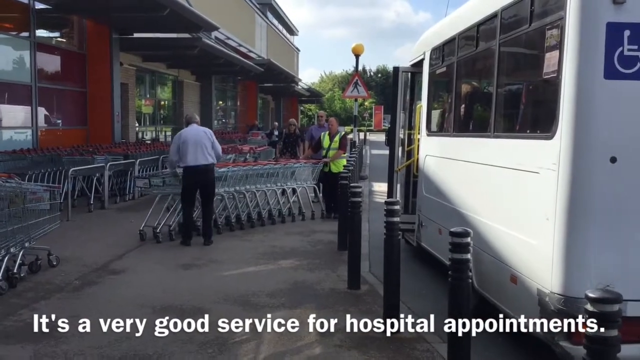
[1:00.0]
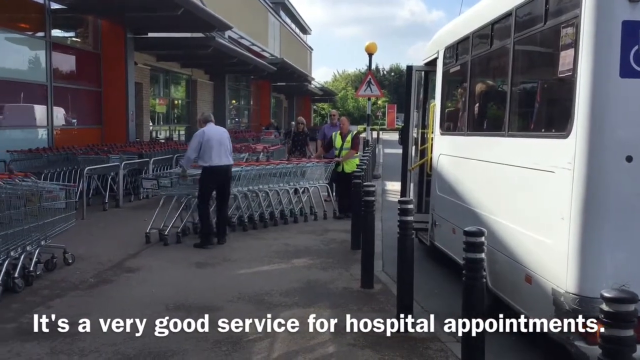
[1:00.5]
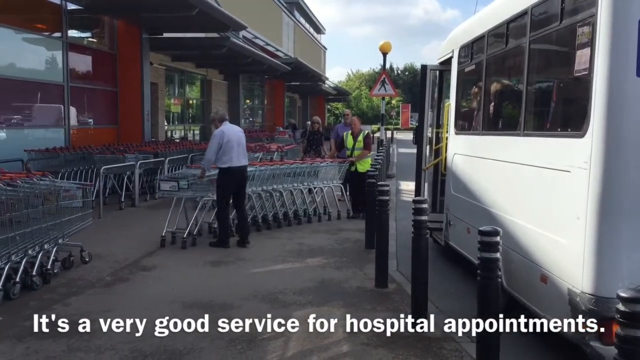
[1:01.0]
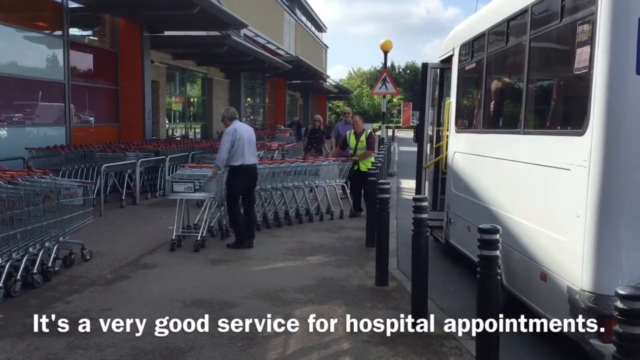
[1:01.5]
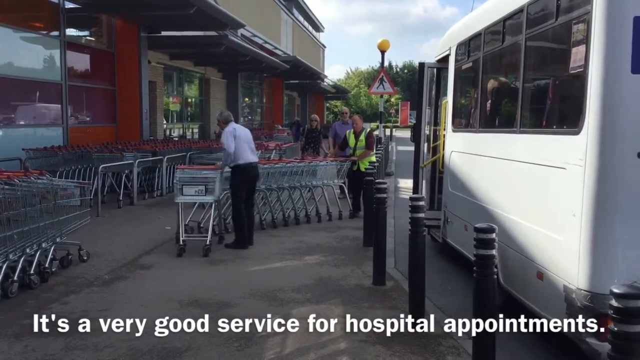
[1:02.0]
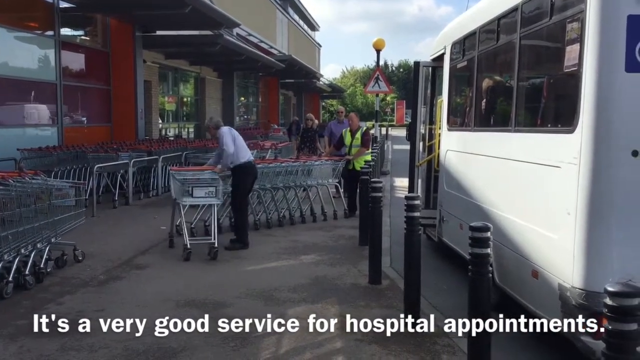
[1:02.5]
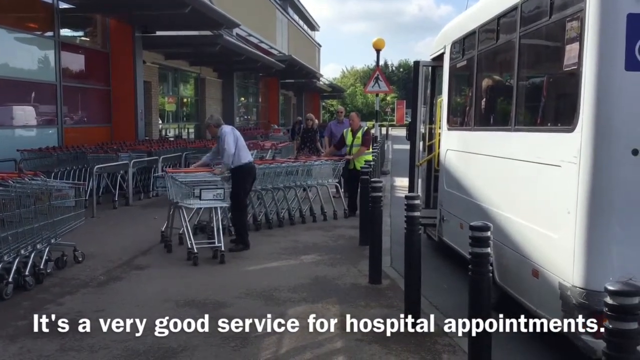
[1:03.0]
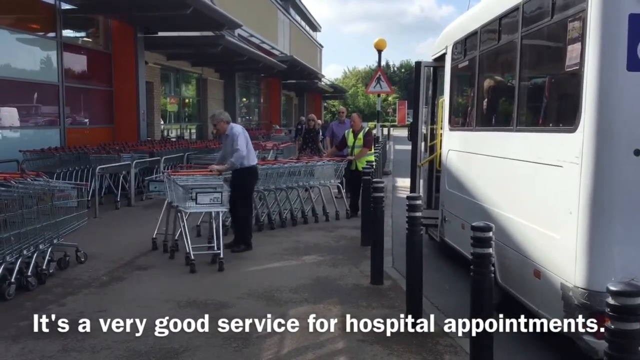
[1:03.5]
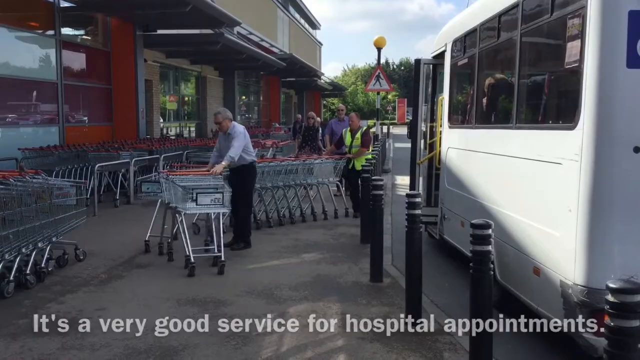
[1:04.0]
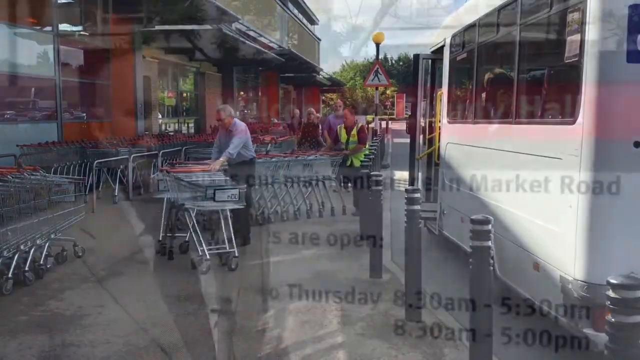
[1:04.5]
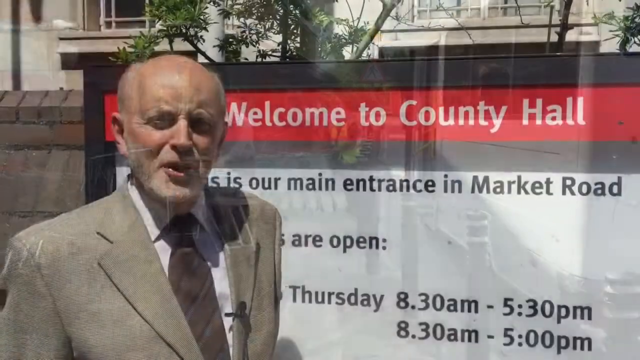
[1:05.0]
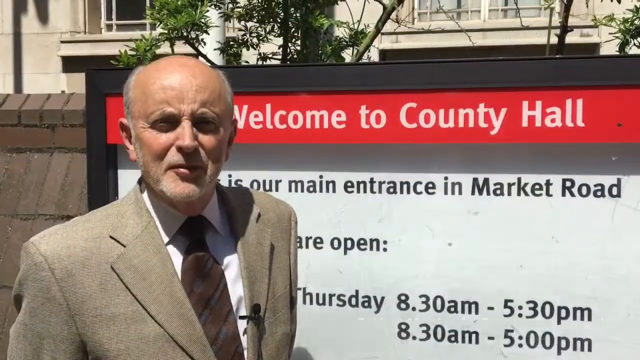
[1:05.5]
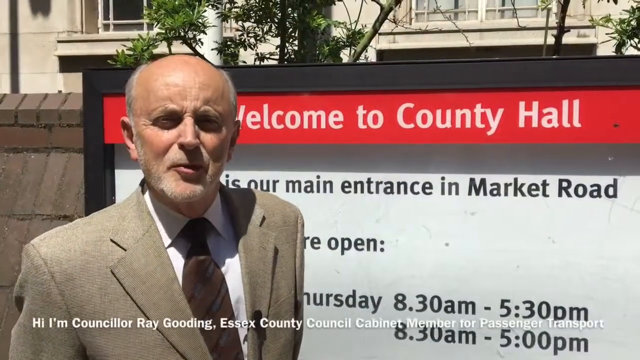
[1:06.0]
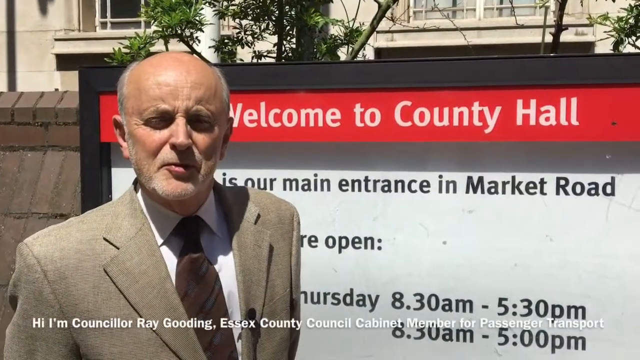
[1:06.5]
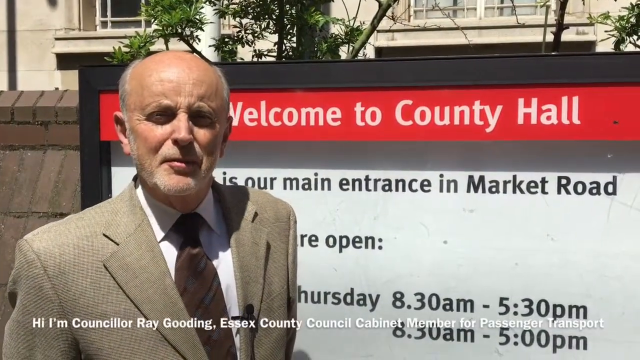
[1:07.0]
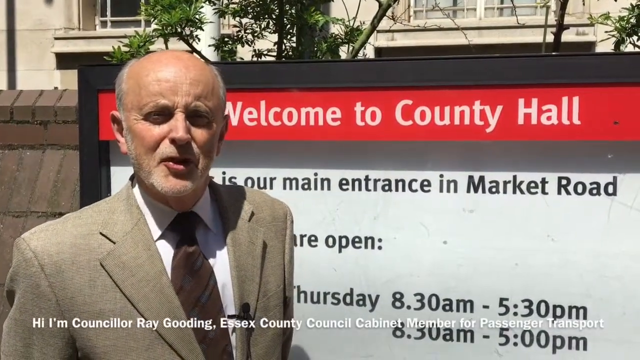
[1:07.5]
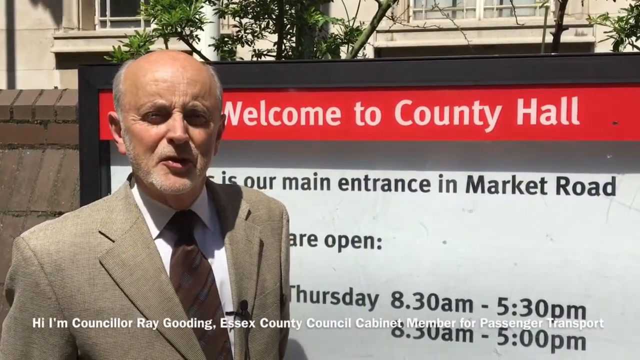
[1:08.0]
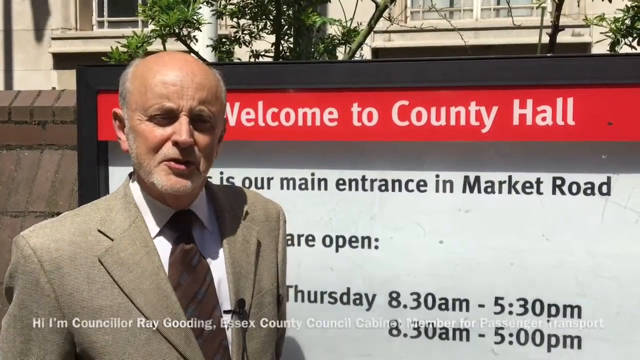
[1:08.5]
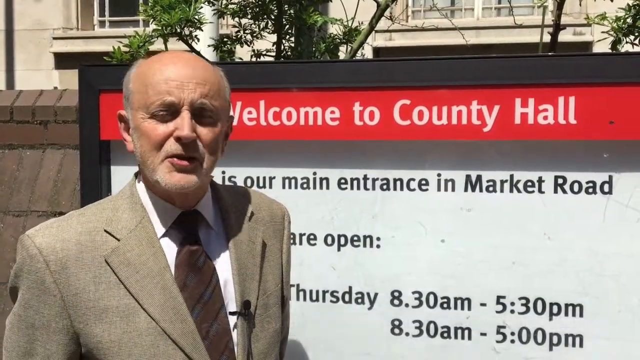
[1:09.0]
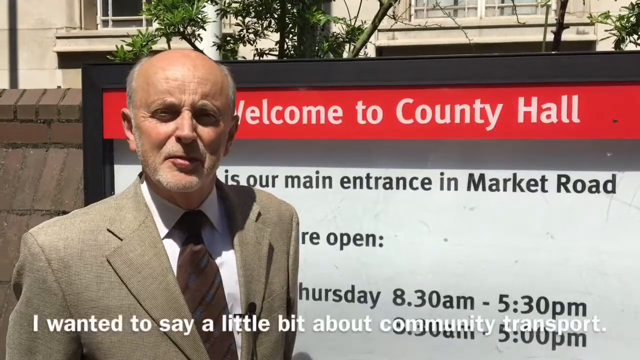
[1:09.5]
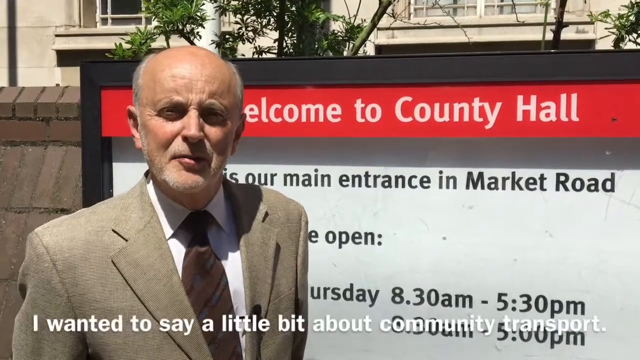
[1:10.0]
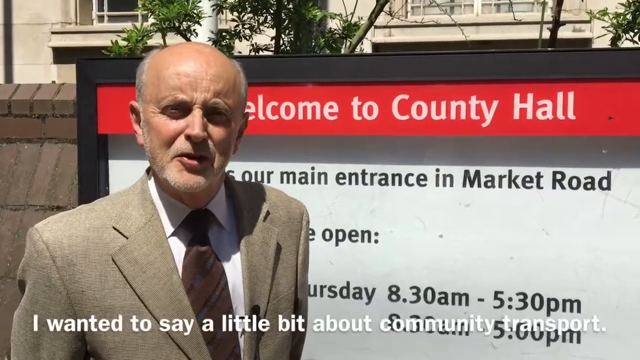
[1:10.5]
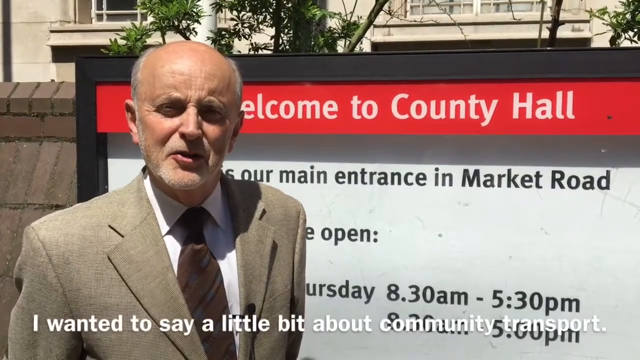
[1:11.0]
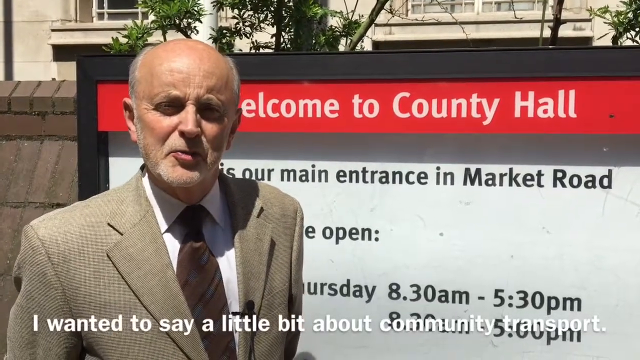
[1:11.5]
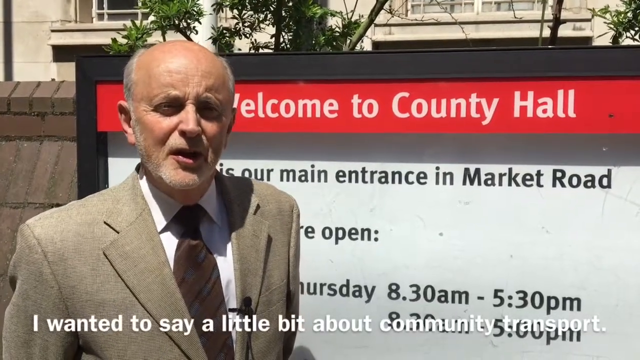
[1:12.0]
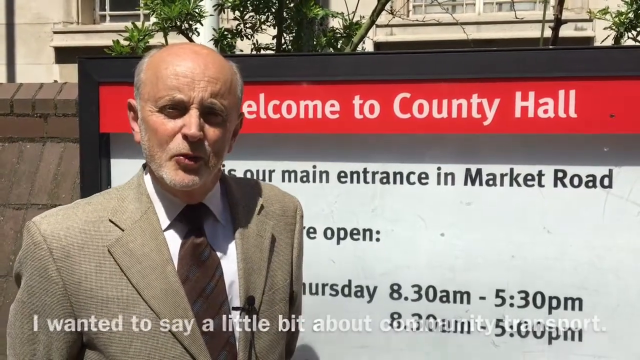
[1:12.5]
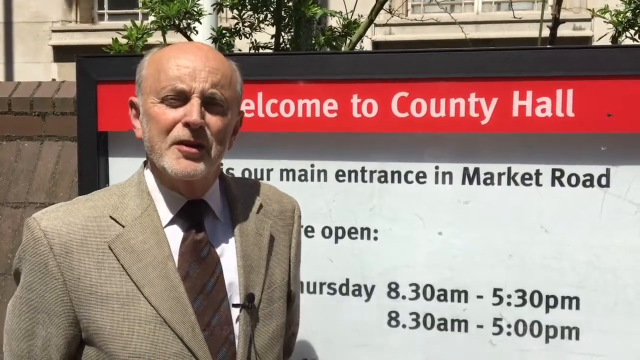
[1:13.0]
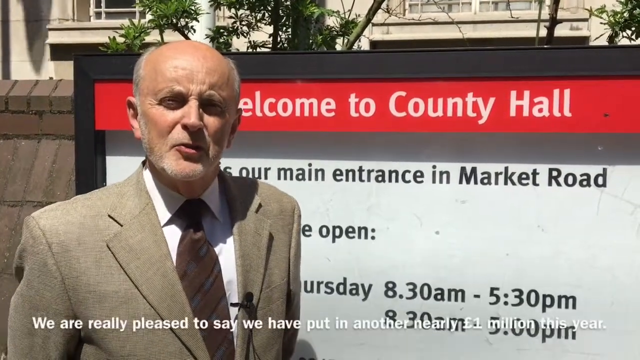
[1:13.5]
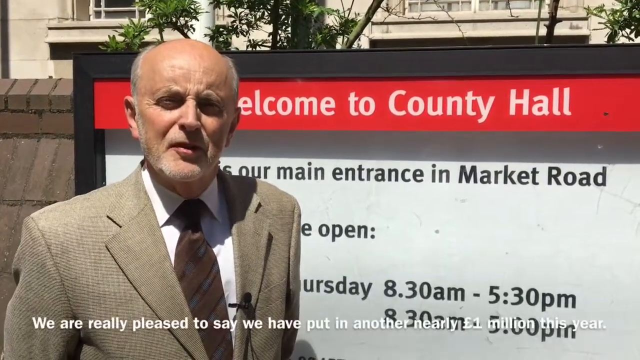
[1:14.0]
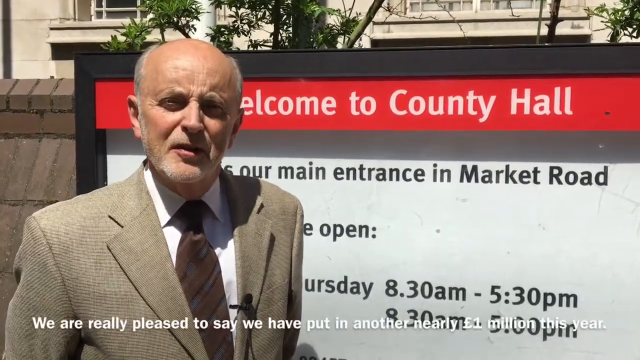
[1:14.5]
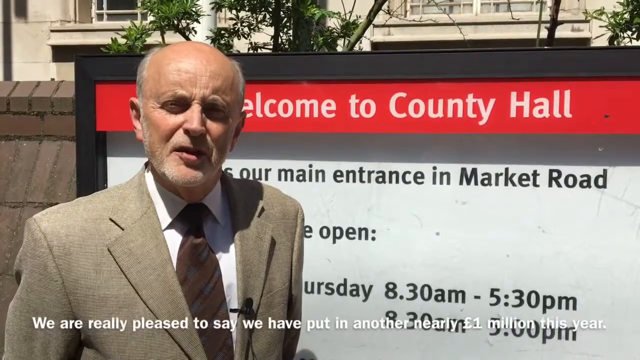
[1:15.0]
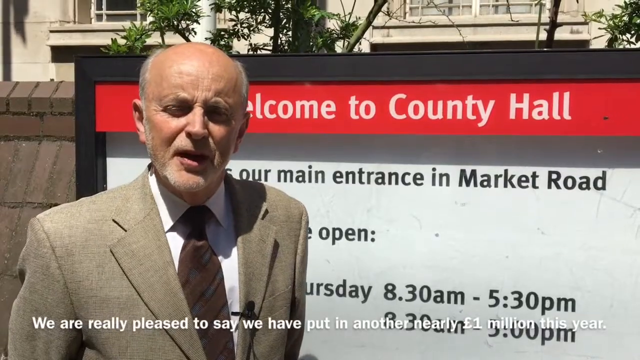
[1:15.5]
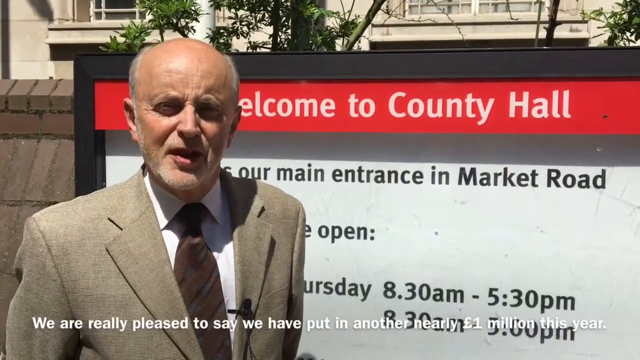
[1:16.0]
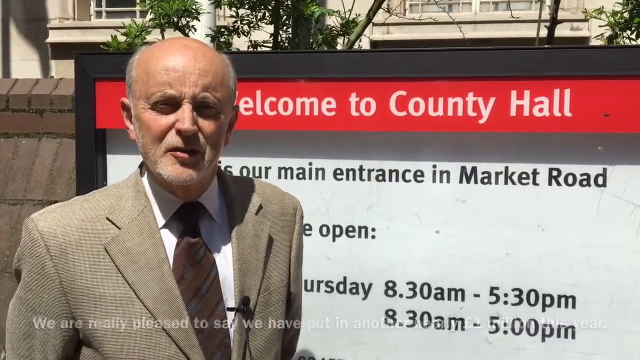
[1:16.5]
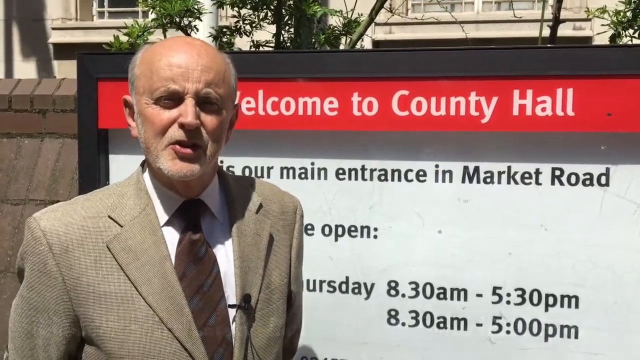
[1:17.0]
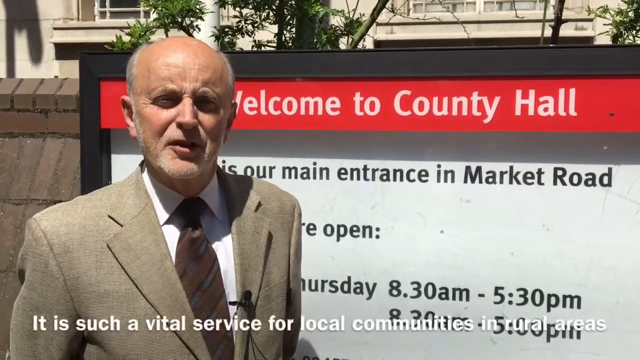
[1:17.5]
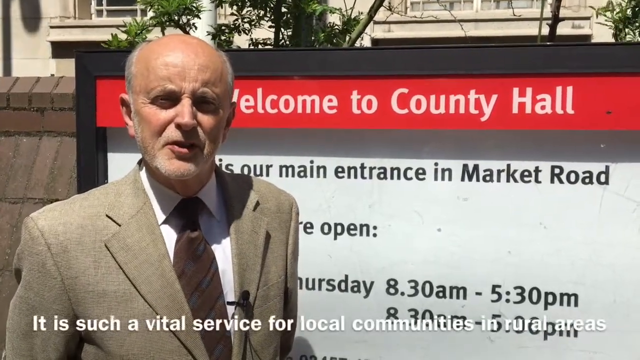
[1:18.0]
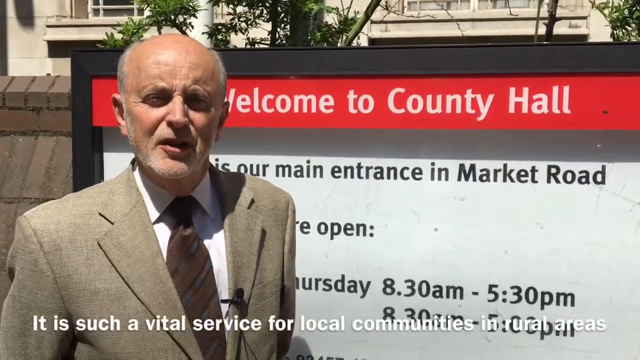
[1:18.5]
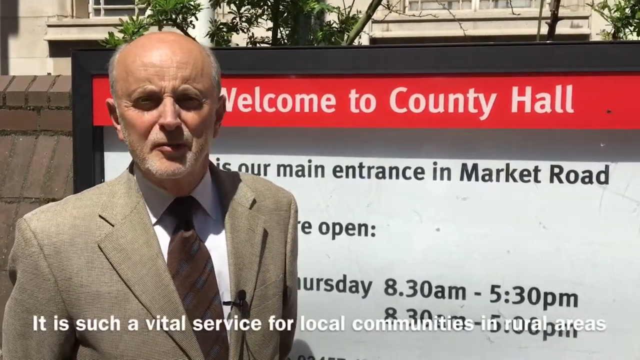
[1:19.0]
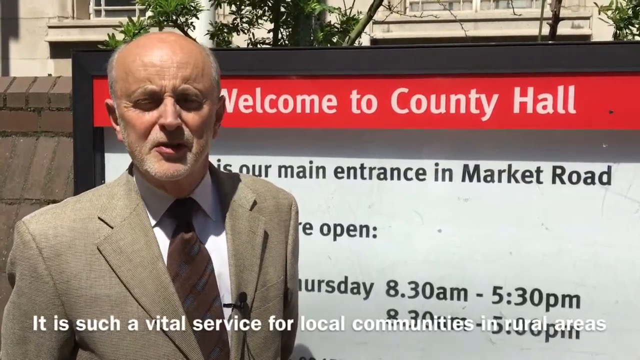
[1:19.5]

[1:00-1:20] A white bus is parked on the side of the entrance of a large grocery store. A person in a green safety vest is pushing a long line of carts back to the cart stand in front of the store, and an older man in a white or light gray button-down shirt and black slacks takes one of the carts off the end of the line. A white caption at the bottom of the screen reads "it's a very good service for hospital appointments." The scene changes to an older man wearing a tan blazer, a white button-down shirt and a dark brown tie. He is bald except for a little gray hair on the sides of his head, and he has a small gray mustache and a short beard. He is standing in front of a sign that reads "Welcome to County Hall. This is our main entrance in Market Road", followed by the location's opening hours. The man is shown from the chest up, squinting somewhat, as it appears to be bright and sunny outside, and he speaks to the camera. A white caption at the bottom reads "Hi, I'm Councillor Ray Gooding, Essex County Council Cabinet Member for Passenger Transport. I wanted to say a little bit about community transport. We are really pleased to say we have put in another nearly 1 million pounds this year. It is such a vital service for local communities in rural areas."